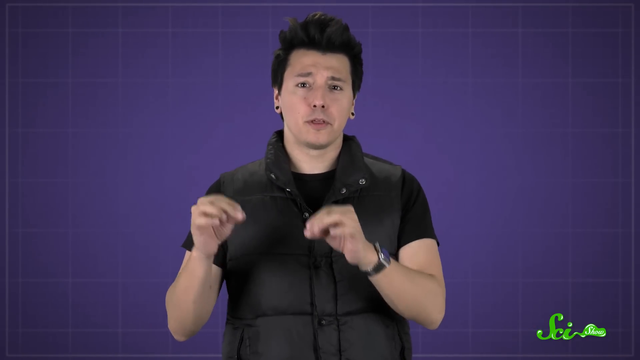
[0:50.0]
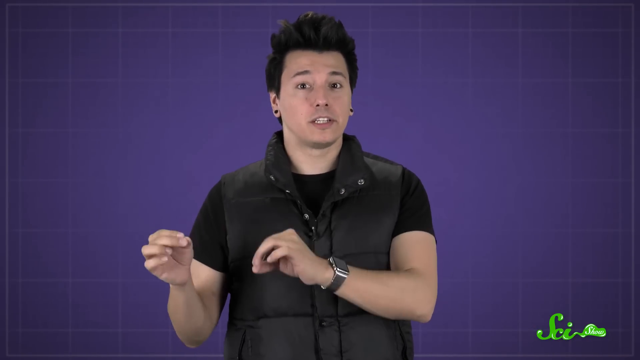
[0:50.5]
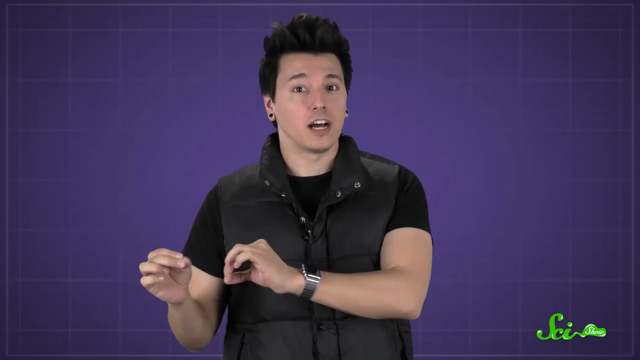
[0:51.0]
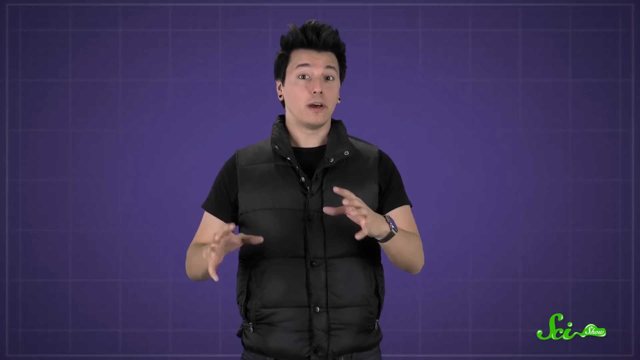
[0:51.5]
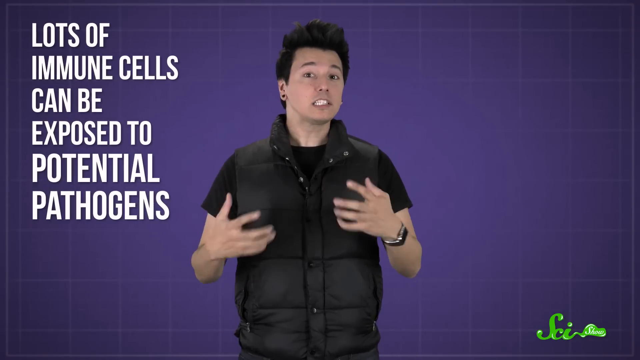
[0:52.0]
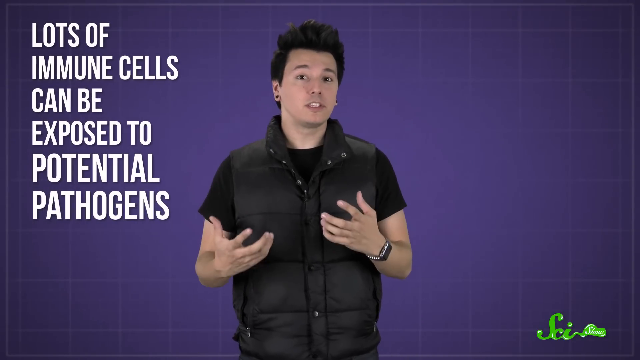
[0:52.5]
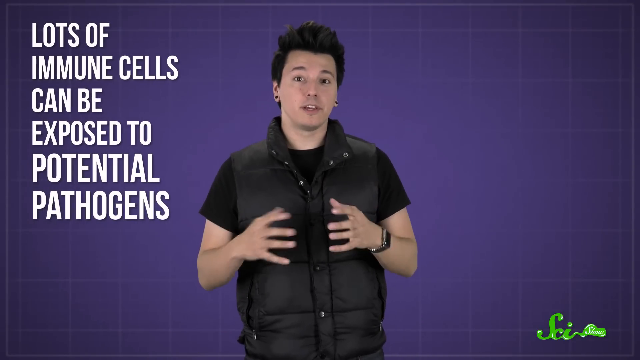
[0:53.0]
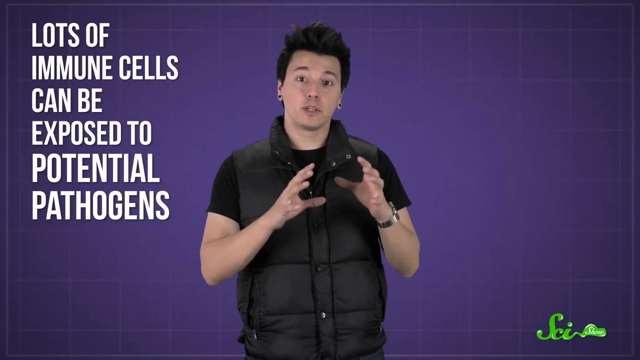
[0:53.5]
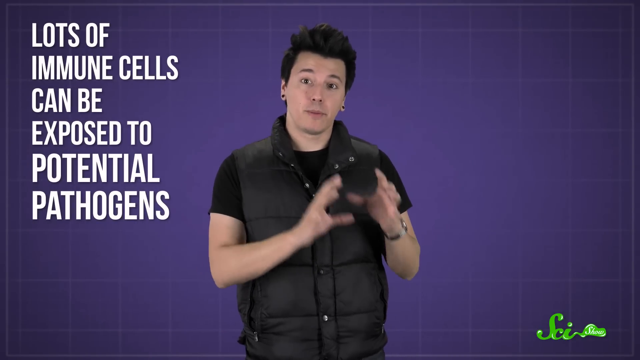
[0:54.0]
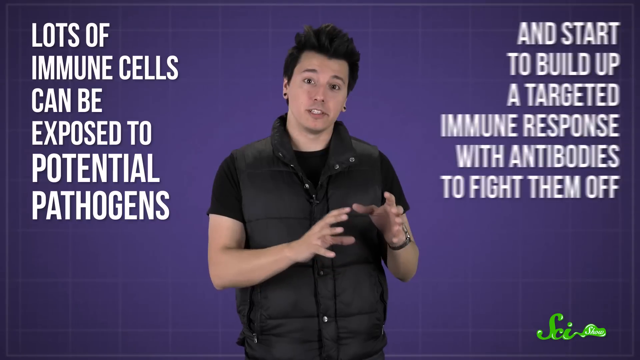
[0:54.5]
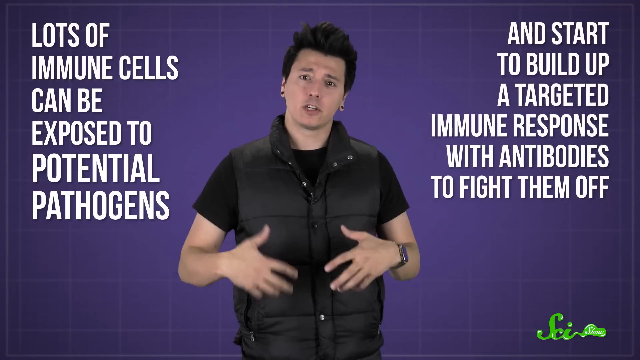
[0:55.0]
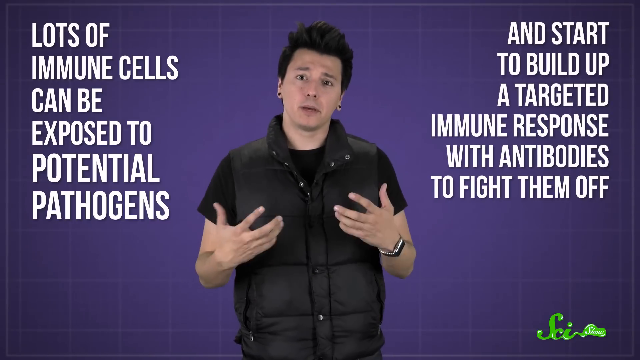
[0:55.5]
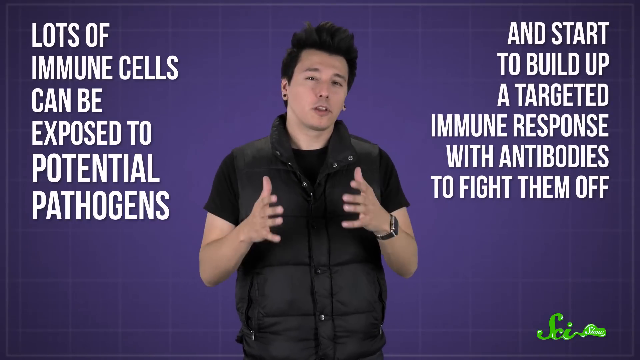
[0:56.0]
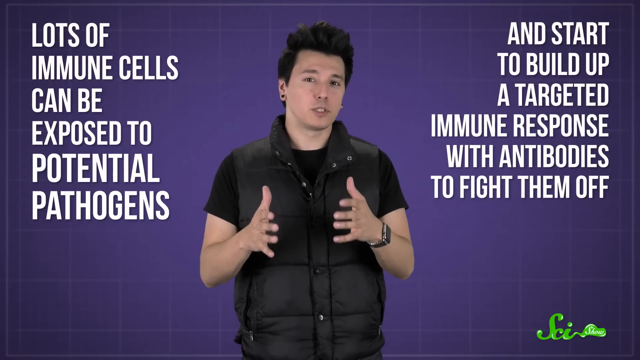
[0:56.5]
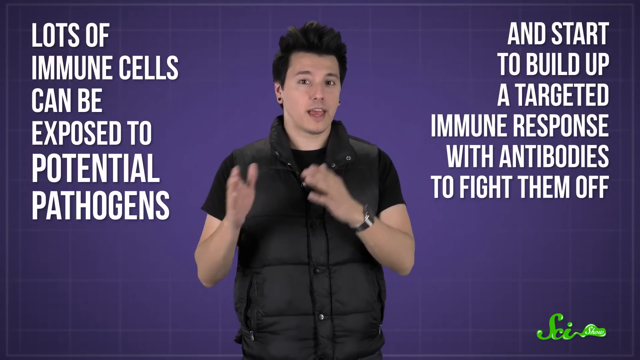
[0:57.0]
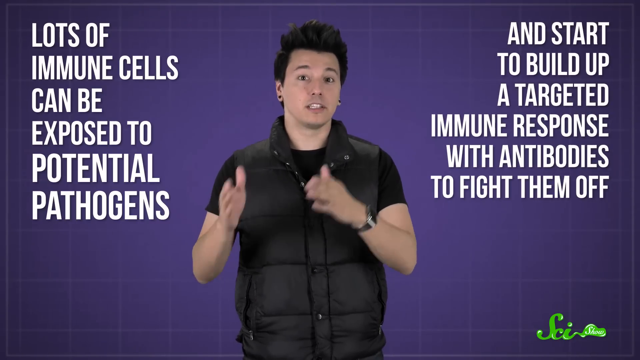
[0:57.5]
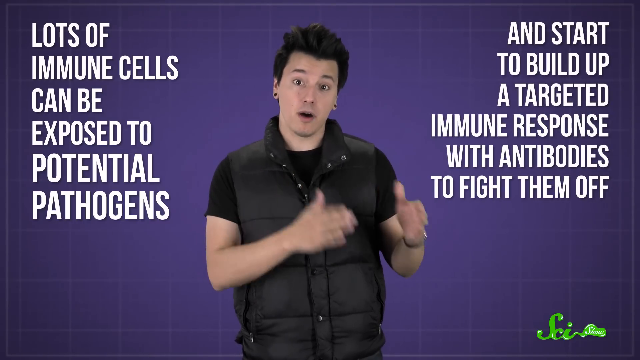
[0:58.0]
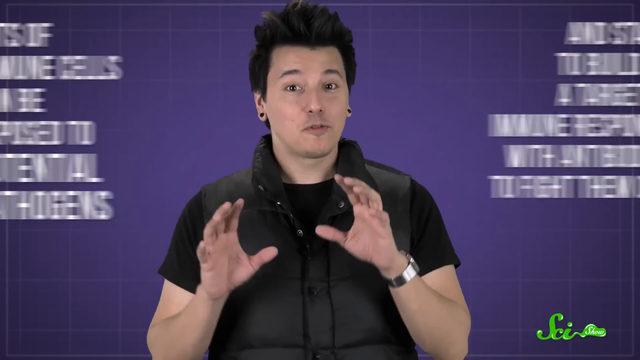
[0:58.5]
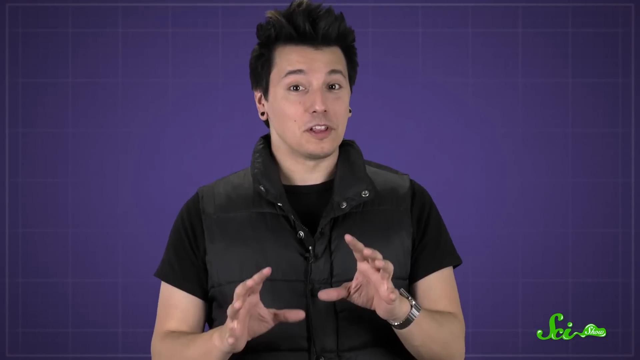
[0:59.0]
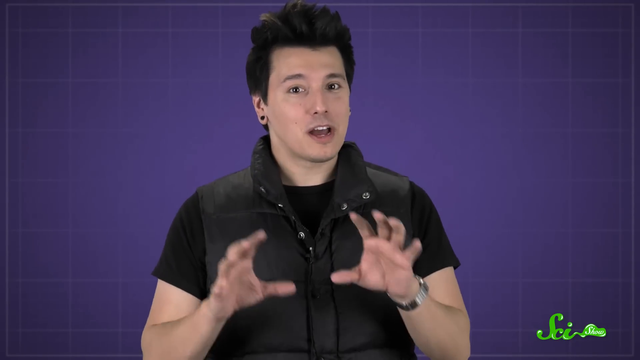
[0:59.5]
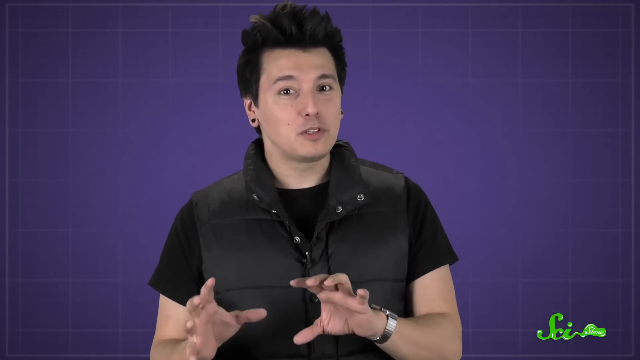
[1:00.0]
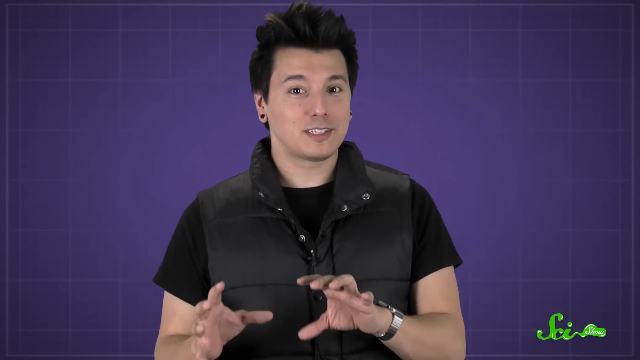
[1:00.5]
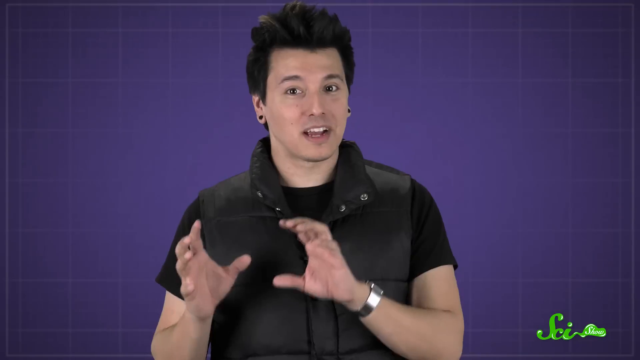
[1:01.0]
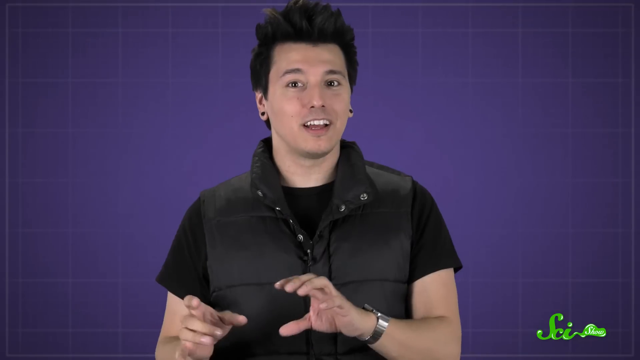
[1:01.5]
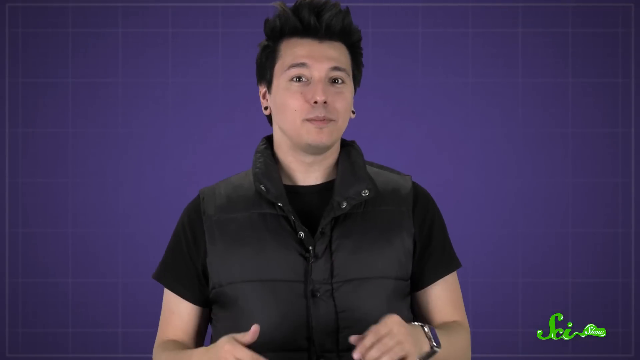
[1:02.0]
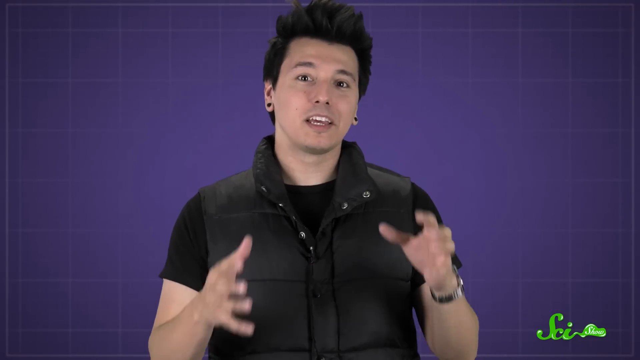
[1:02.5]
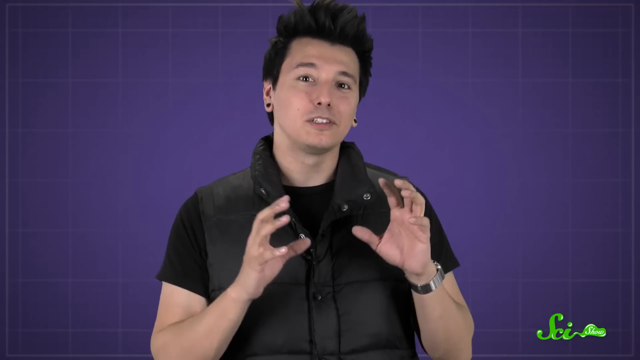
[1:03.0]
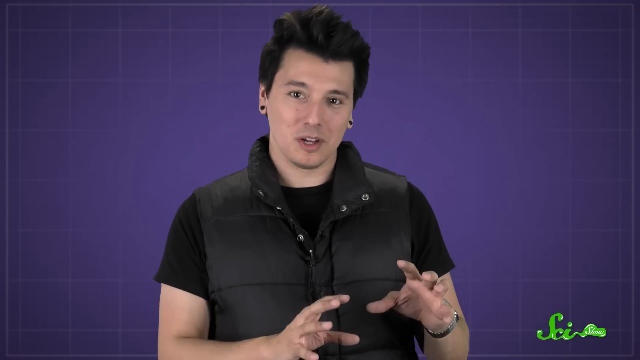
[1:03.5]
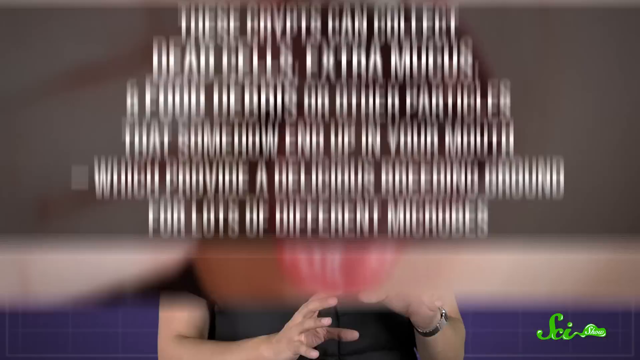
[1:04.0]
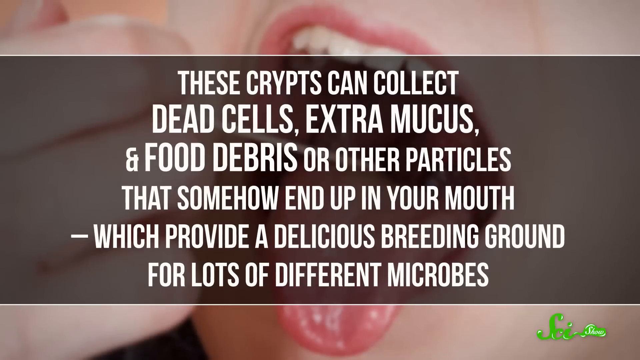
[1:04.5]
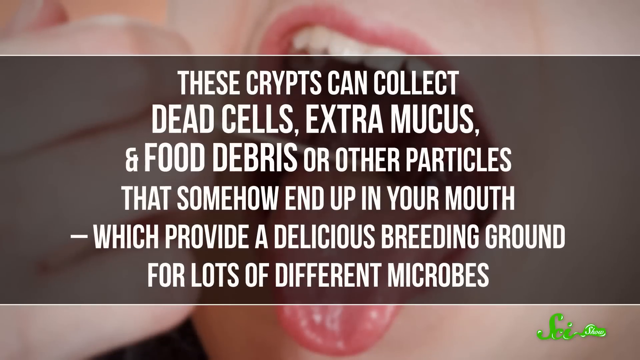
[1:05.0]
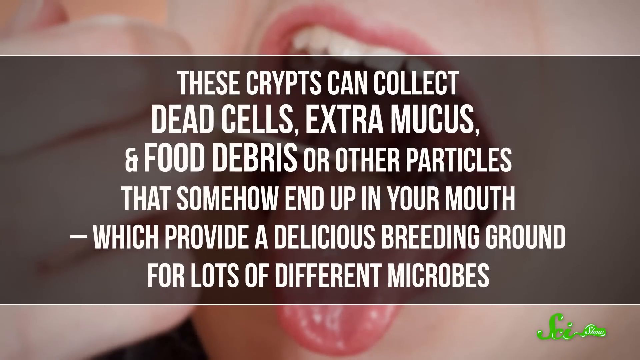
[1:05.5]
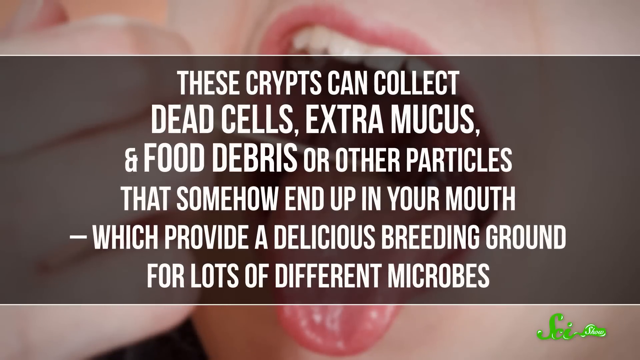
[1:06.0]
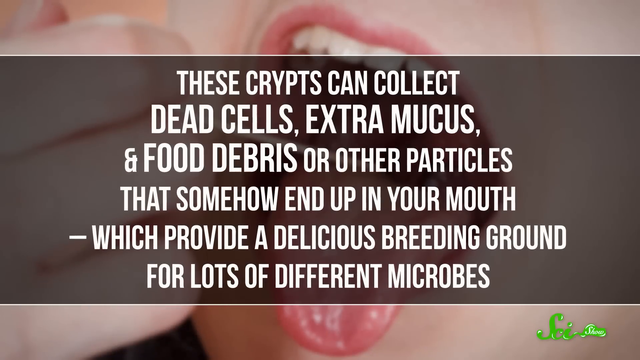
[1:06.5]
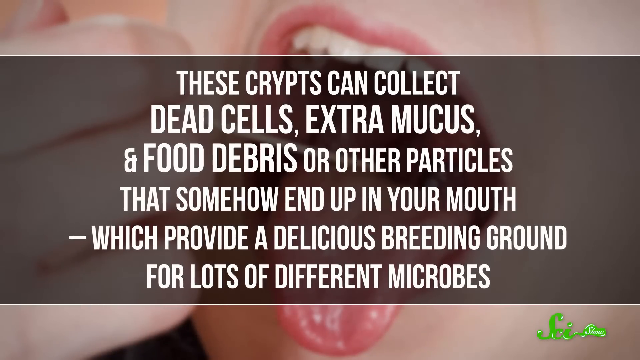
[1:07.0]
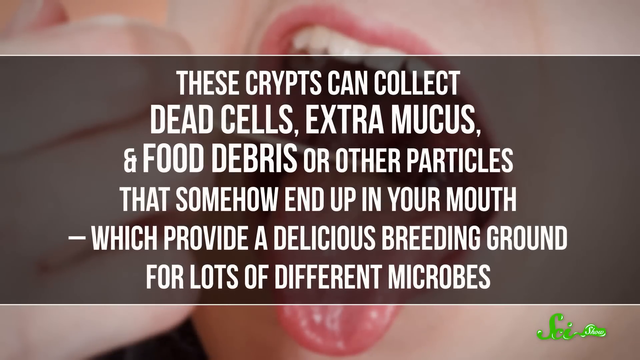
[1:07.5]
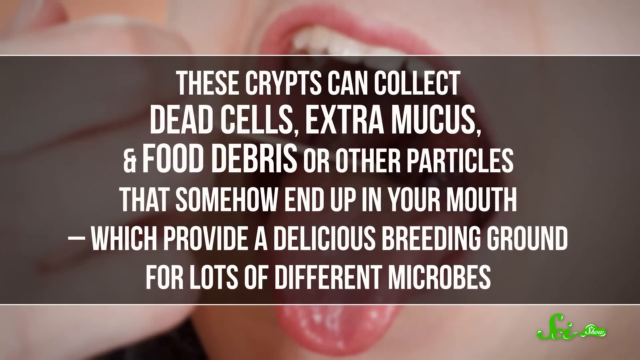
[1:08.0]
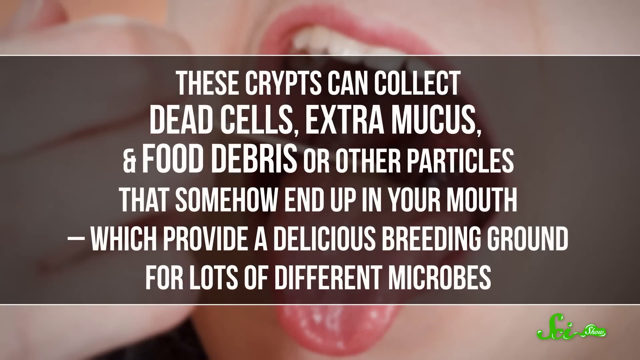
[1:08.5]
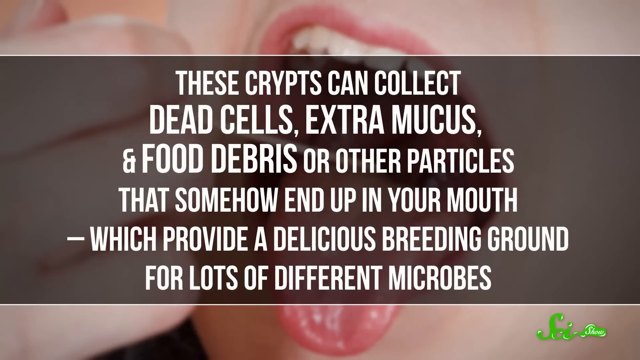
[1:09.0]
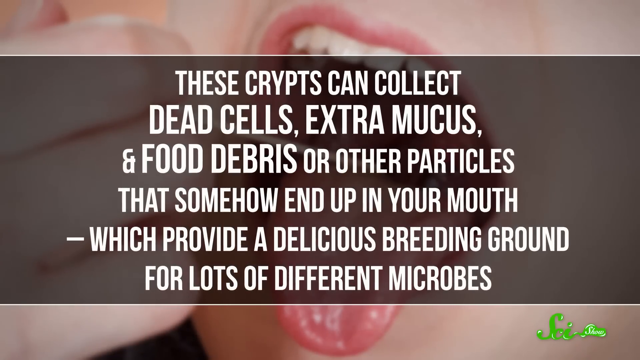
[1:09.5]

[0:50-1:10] A person wearing a silver watch talks directly to the audience, using many hand gestures, and text appears on the screen. He says that immune cells can build up a targeted immune response with antibodies, and that the crypts can collect dead cells, extra mucus, food debris, or other particles that end up in the mouth.